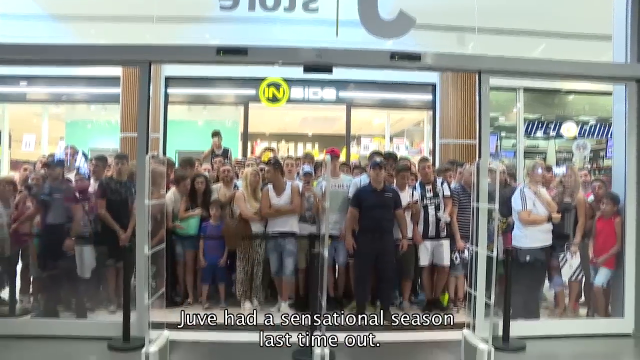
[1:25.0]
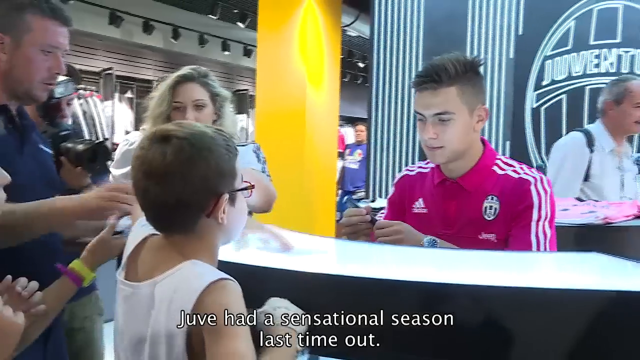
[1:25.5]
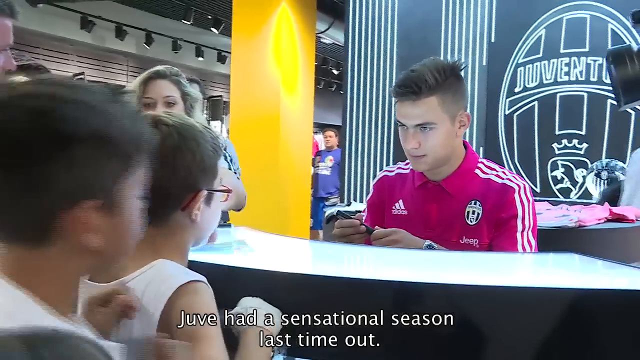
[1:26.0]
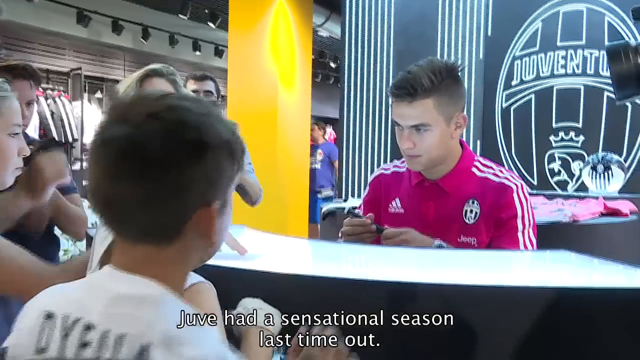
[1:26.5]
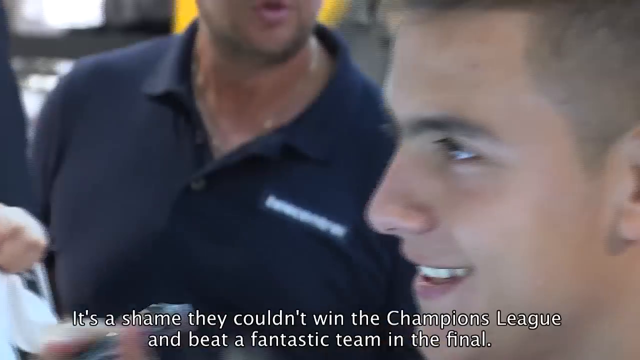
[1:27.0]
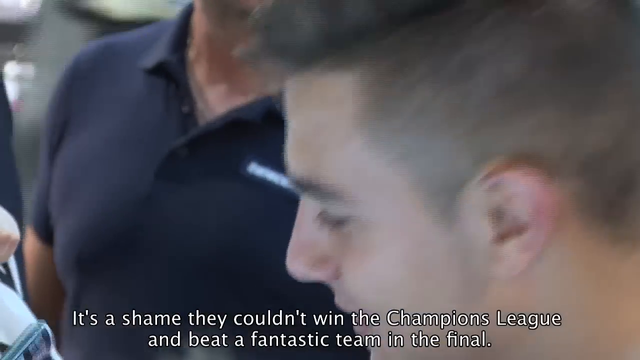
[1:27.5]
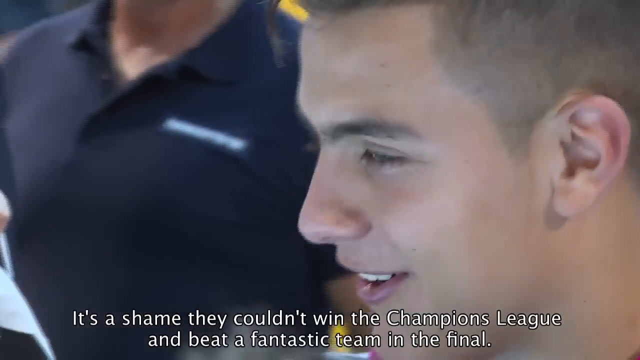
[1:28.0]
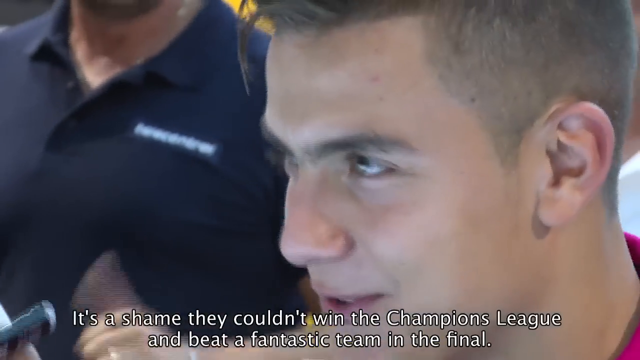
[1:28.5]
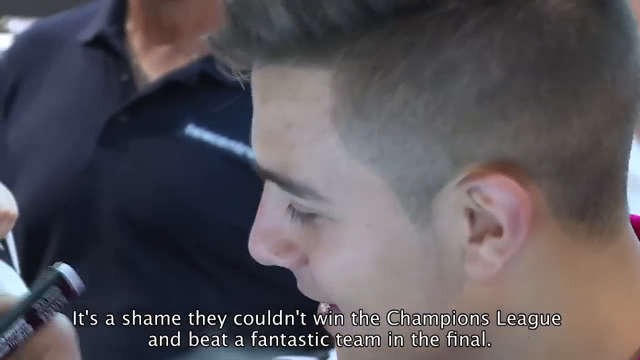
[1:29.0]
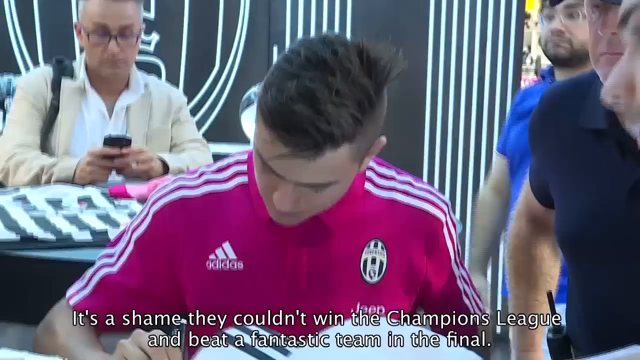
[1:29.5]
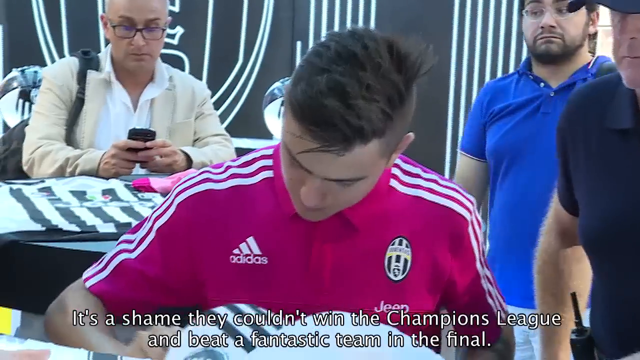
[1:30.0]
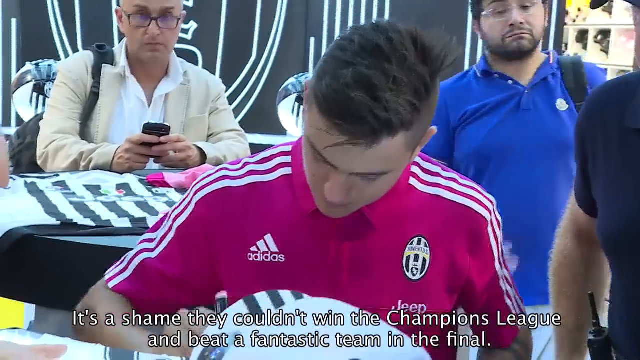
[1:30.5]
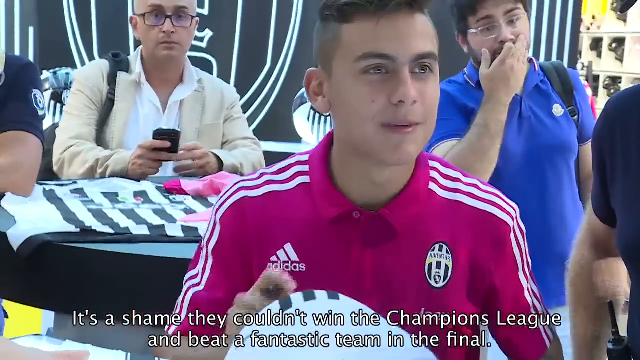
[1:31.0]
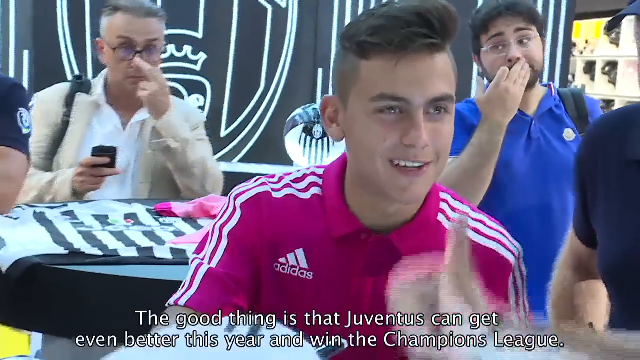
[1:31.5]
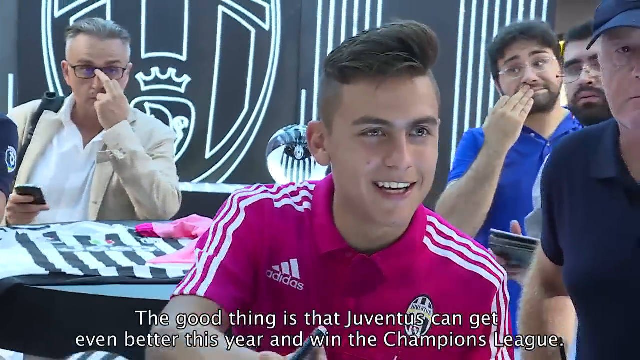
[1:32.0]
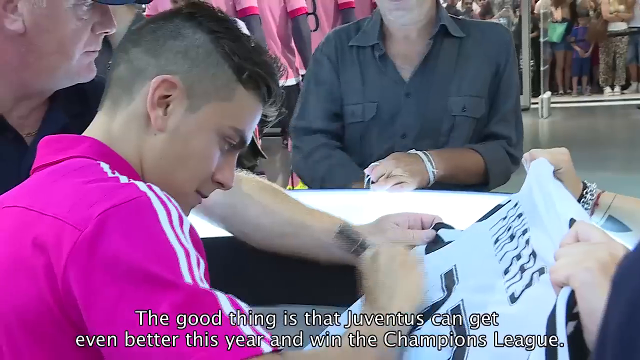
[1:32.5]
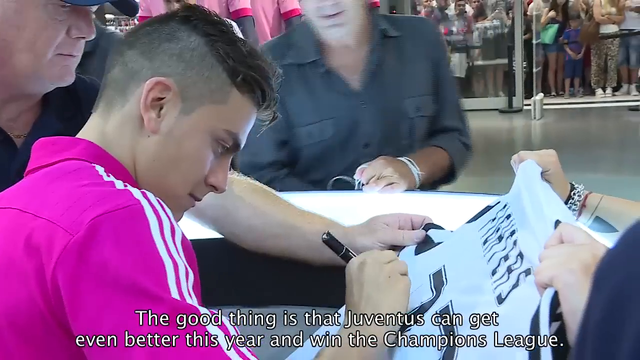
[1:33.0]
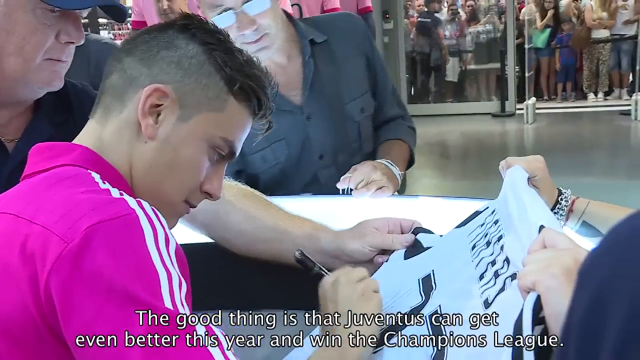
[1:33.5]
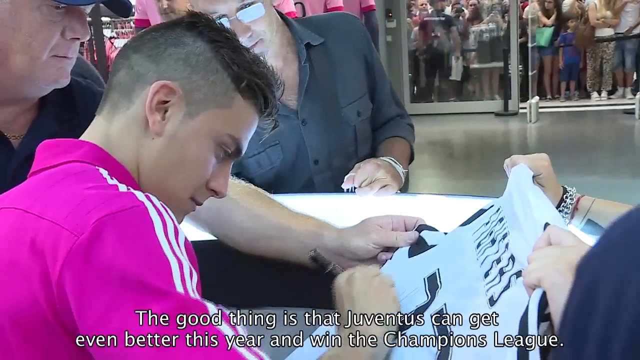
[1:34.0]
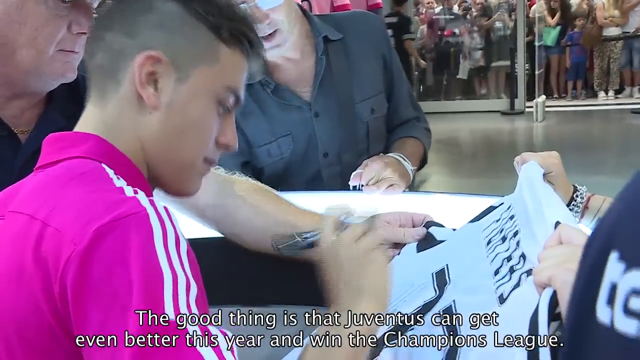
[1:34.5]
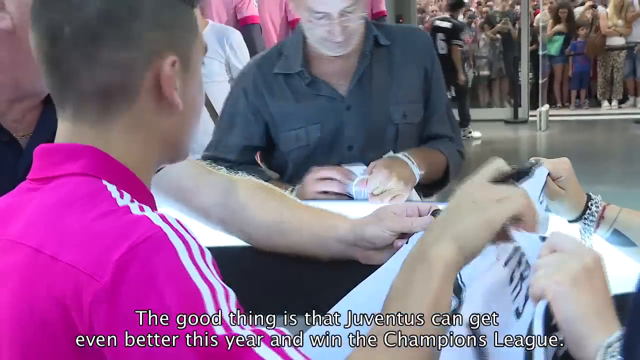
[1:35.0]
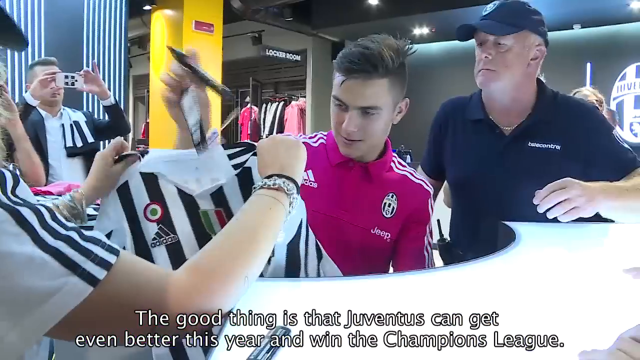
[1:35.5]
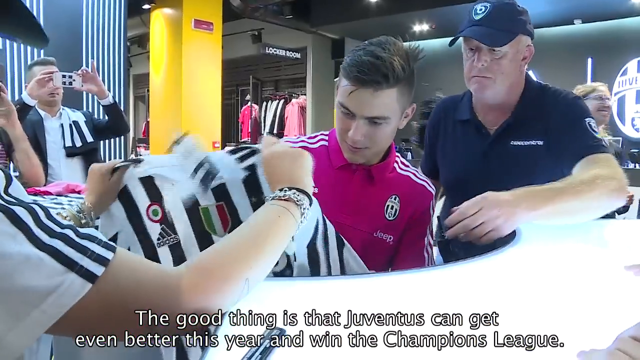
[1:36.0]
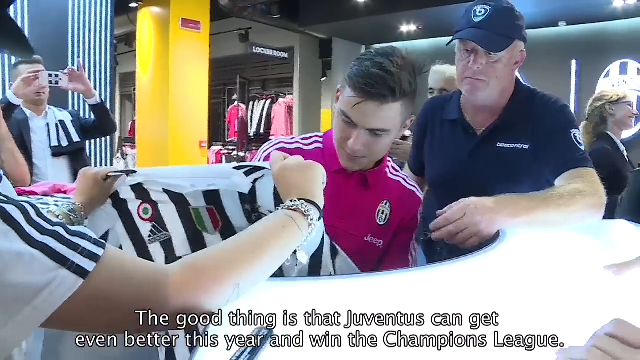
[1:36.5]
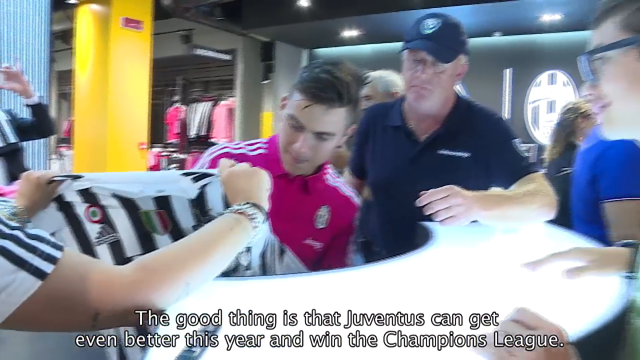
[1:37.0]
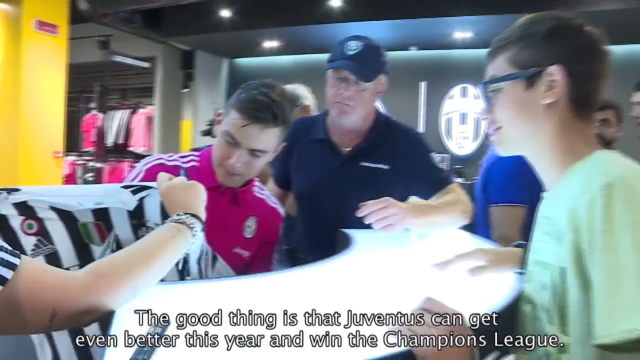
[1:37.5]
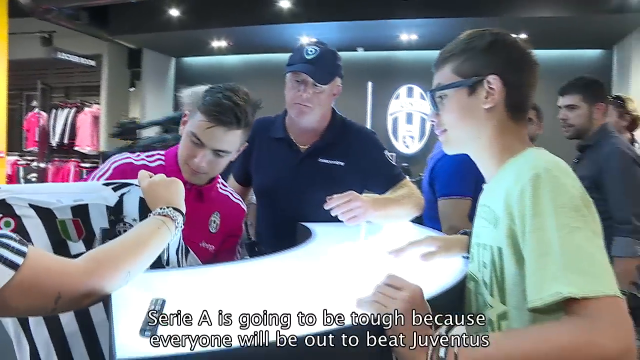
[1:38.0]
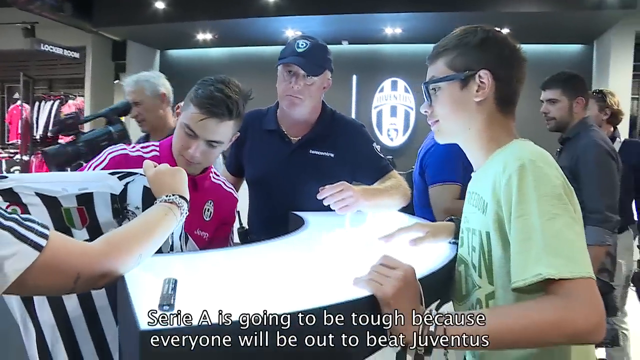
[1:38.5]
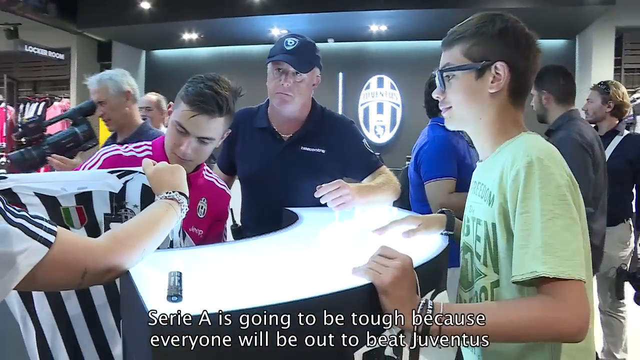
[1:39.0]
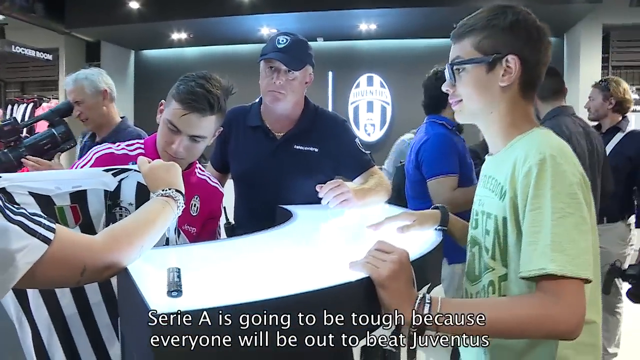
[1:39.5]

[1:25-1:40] Dybala interacts with the crowd, signing many jerseys as people wait. Much of the crowd appears to be smiling, waving and reaching out for a handshake or a picture with him. He appears to take pictures with some of them as he smiles and signs the backs of their jerseys. Security separates the supporters from the soccer player. Several children are around him, trying to get their jerseys signed and taking photos; they crowd him, smiling, and he smiles back, shakes and nods his head. The video then returns to the interview, where he sits with the mic in front of his face, answering more questions from reporters and journalists.